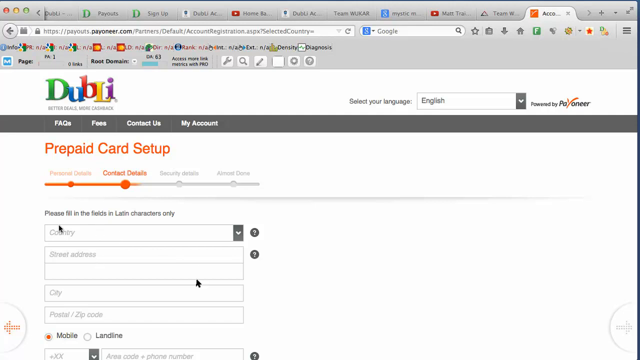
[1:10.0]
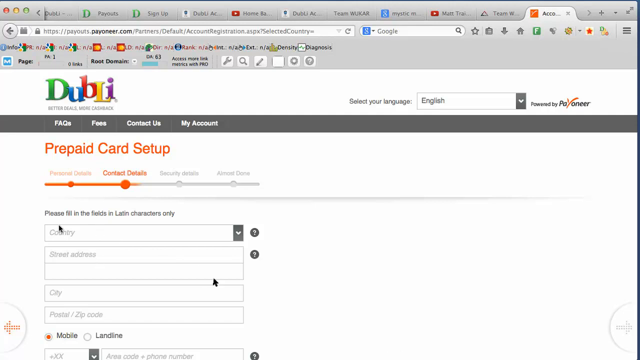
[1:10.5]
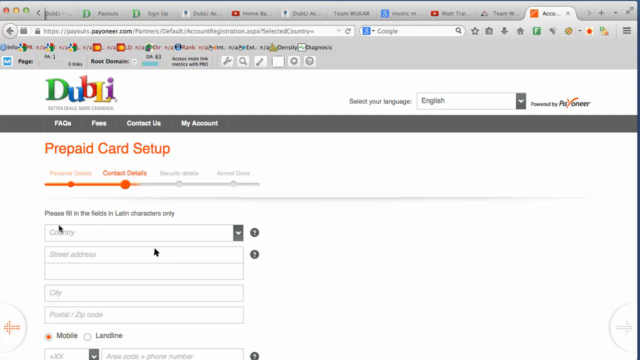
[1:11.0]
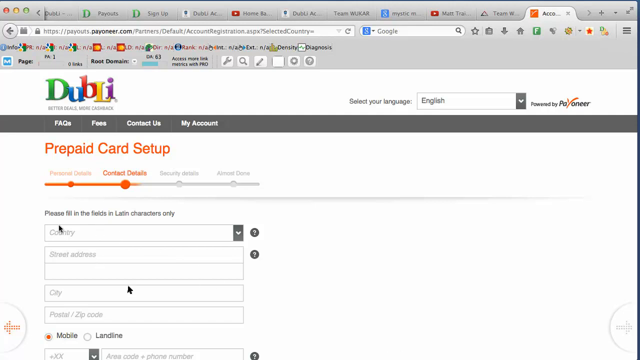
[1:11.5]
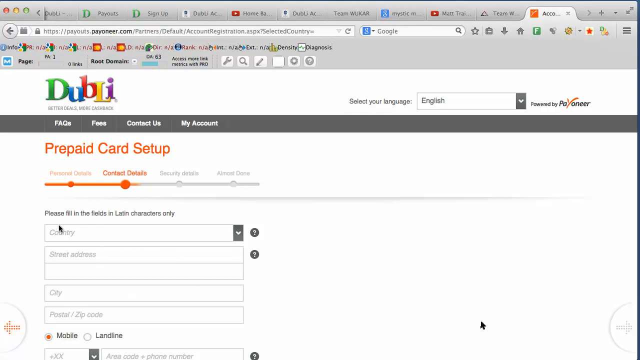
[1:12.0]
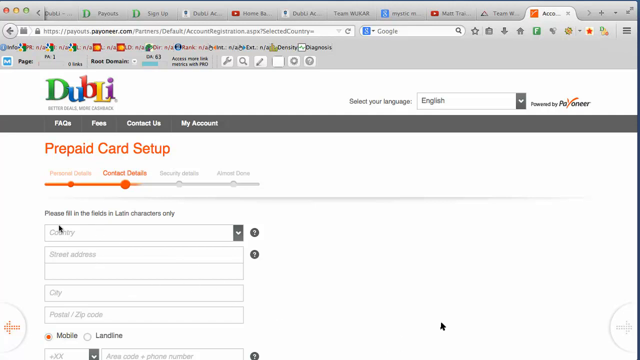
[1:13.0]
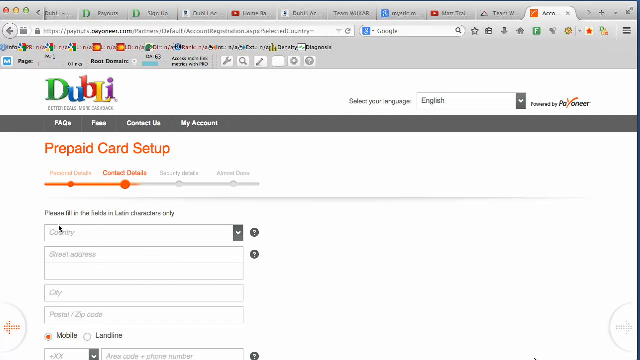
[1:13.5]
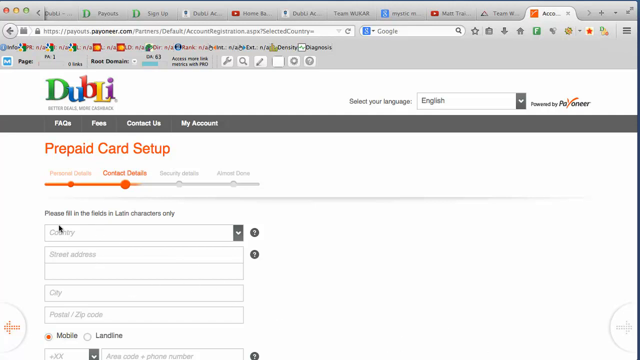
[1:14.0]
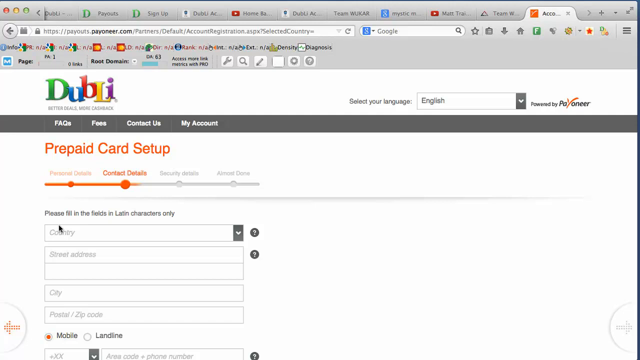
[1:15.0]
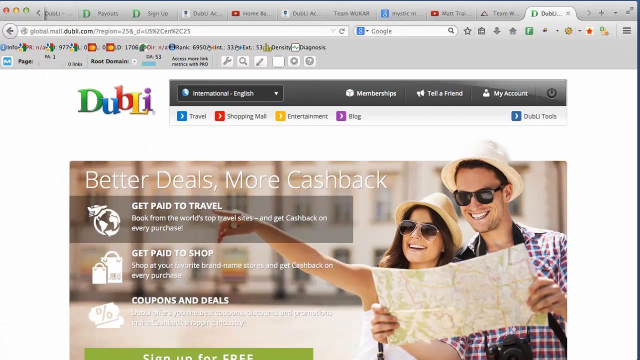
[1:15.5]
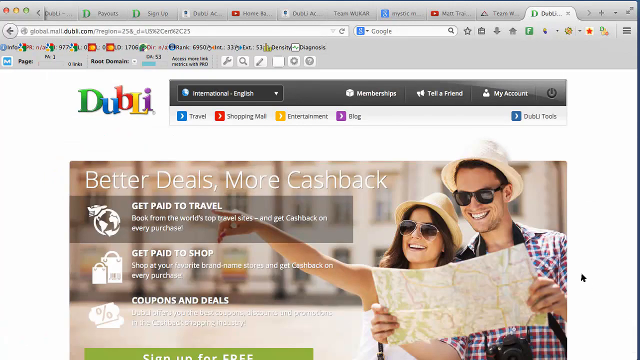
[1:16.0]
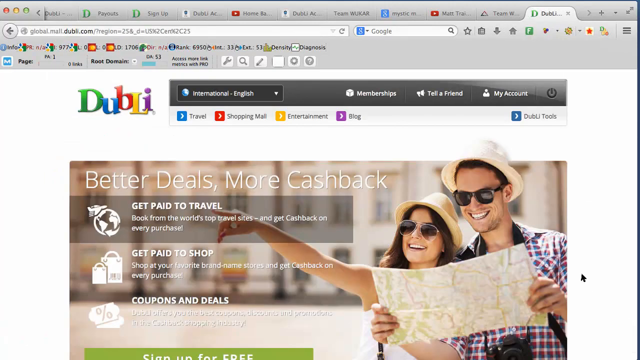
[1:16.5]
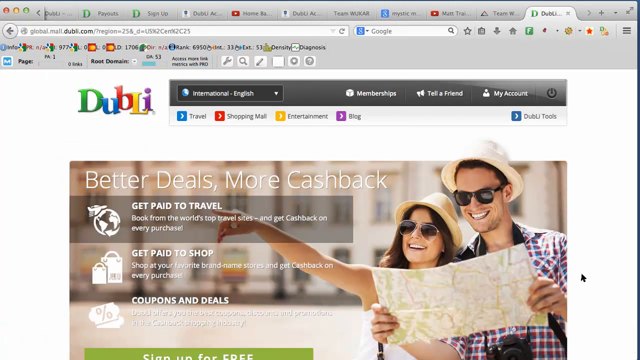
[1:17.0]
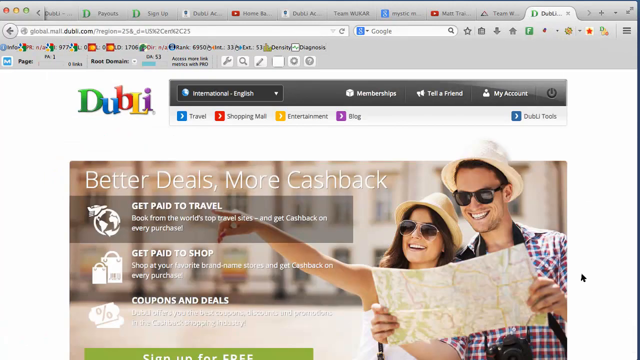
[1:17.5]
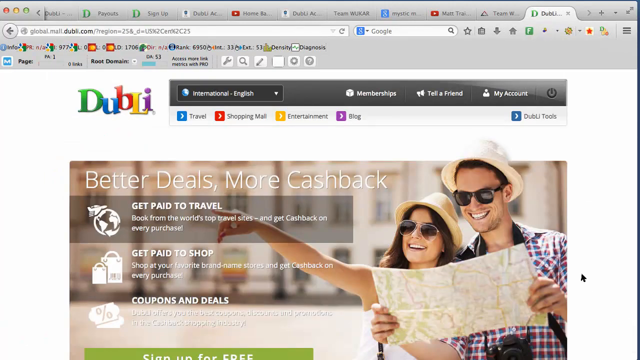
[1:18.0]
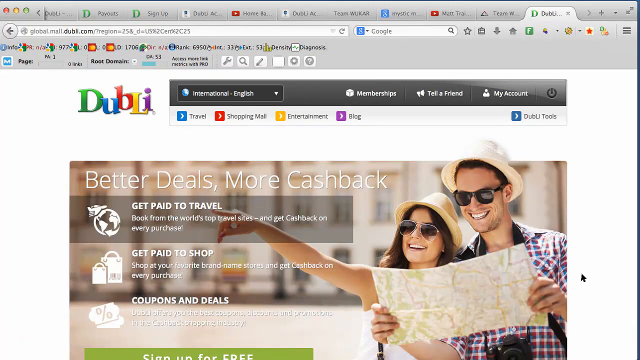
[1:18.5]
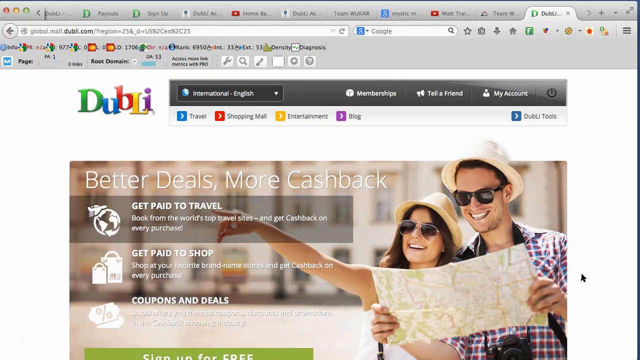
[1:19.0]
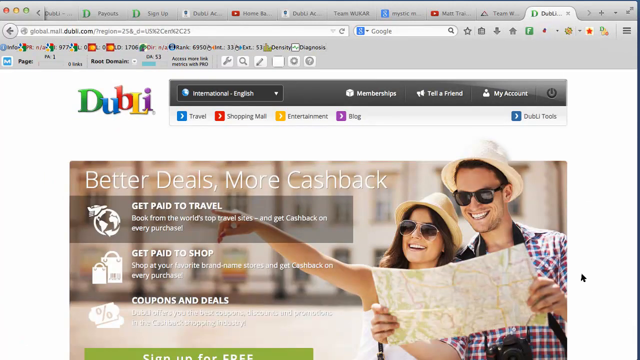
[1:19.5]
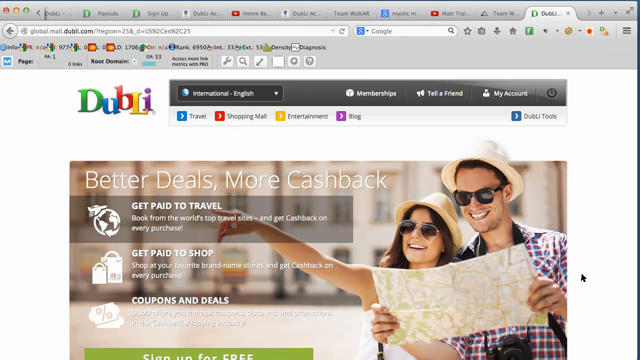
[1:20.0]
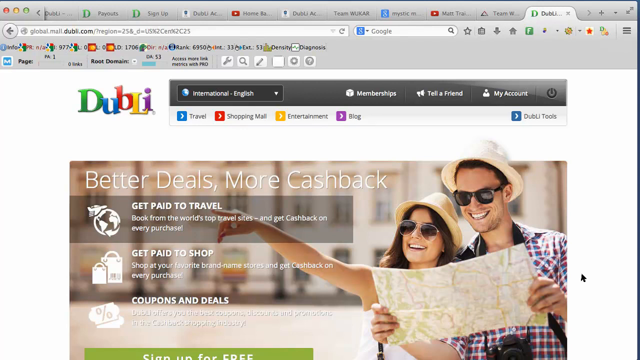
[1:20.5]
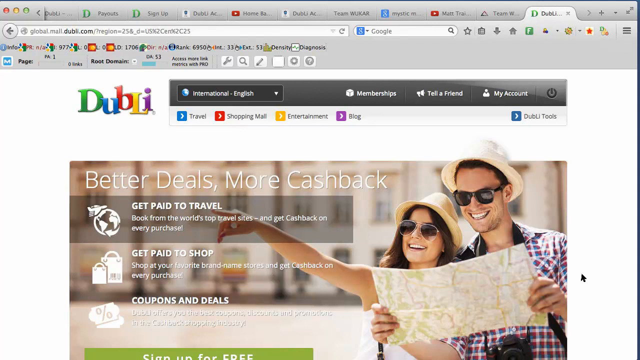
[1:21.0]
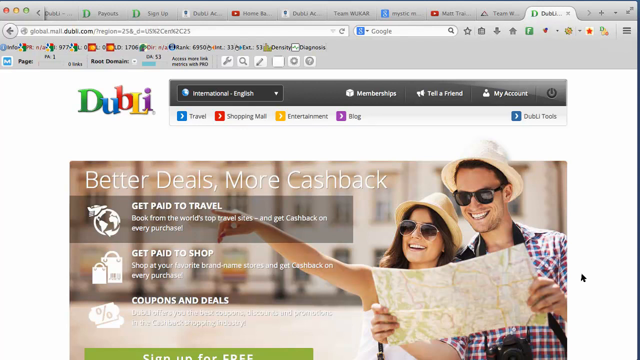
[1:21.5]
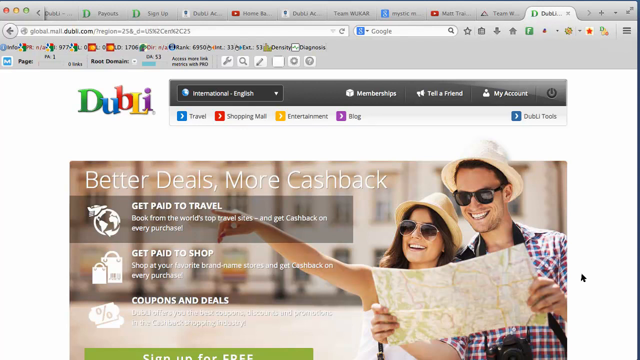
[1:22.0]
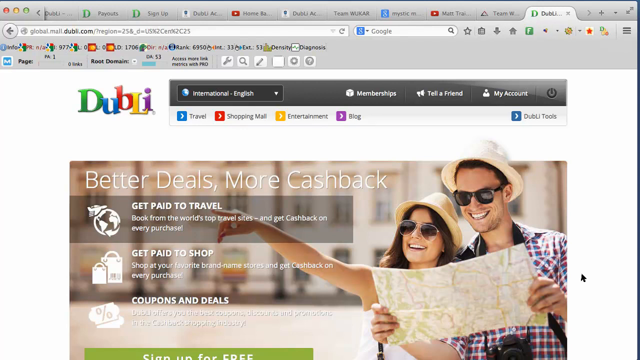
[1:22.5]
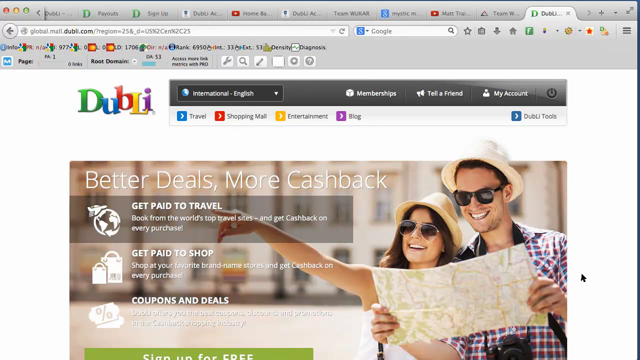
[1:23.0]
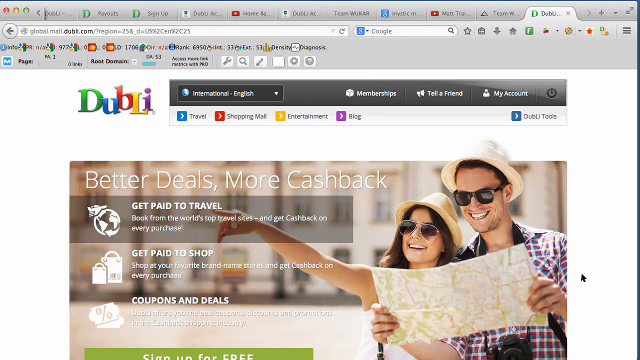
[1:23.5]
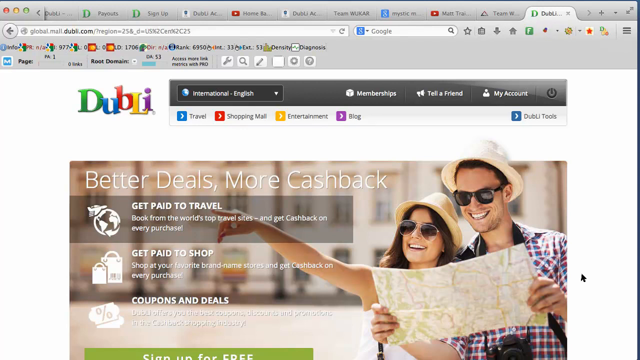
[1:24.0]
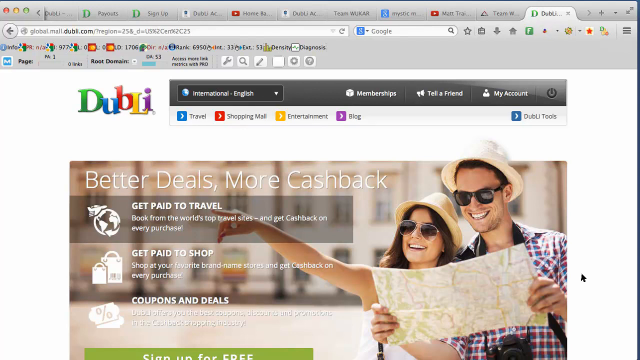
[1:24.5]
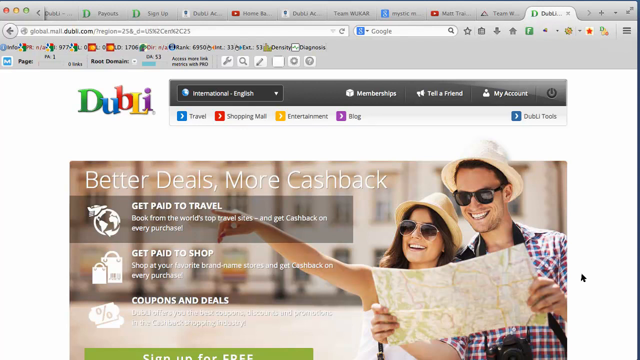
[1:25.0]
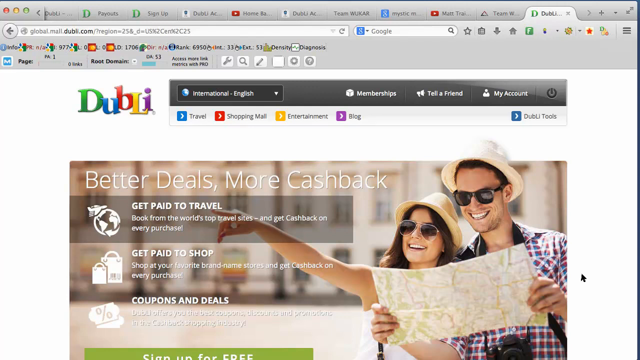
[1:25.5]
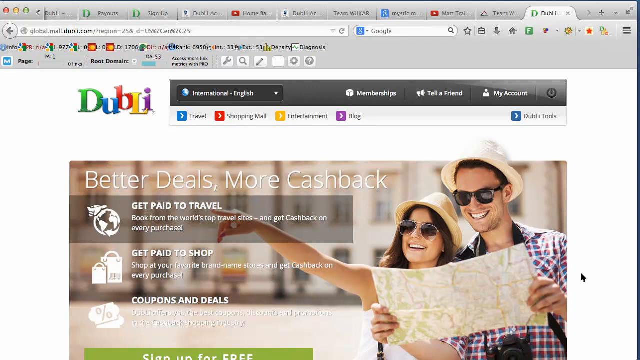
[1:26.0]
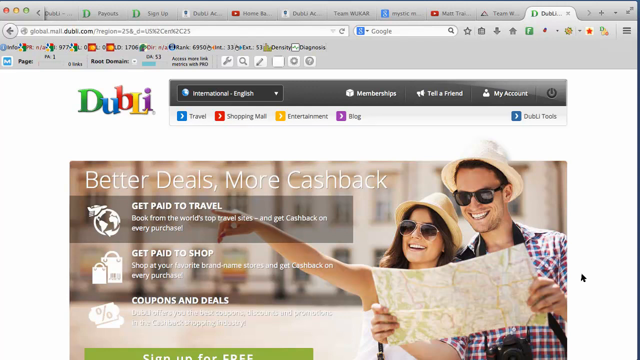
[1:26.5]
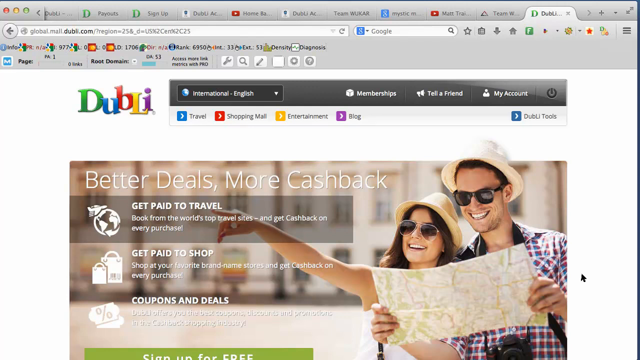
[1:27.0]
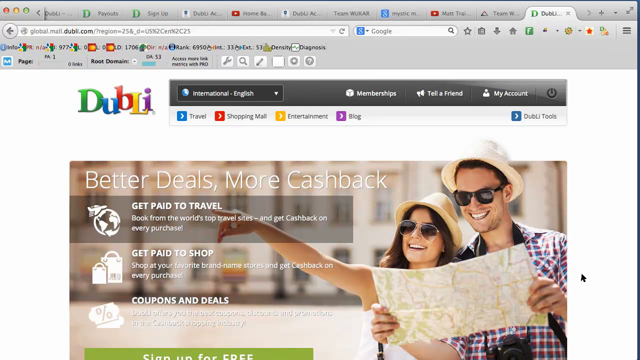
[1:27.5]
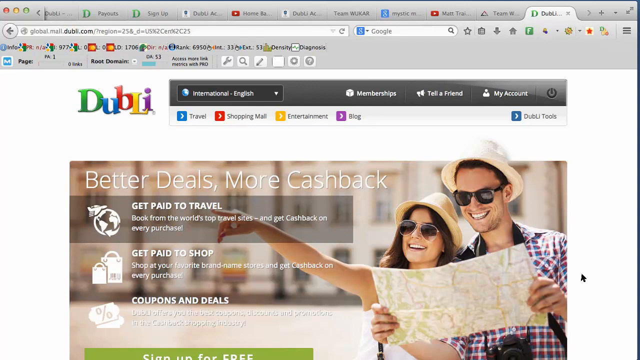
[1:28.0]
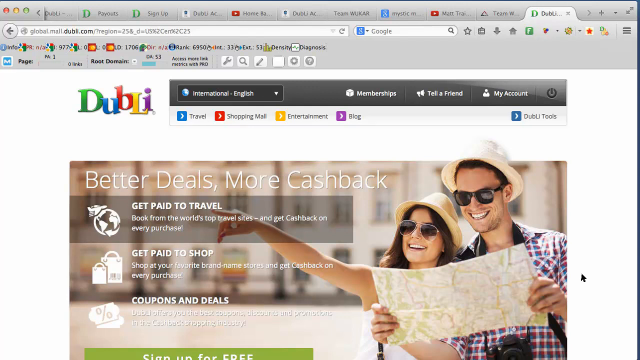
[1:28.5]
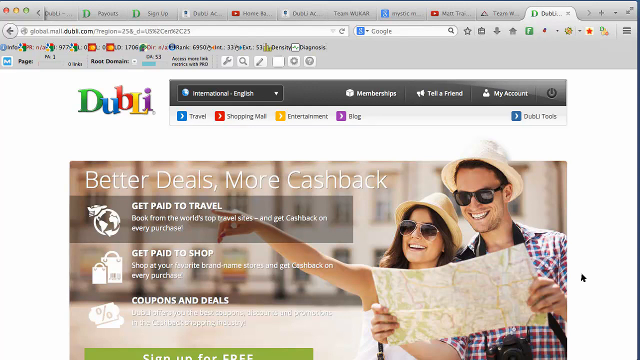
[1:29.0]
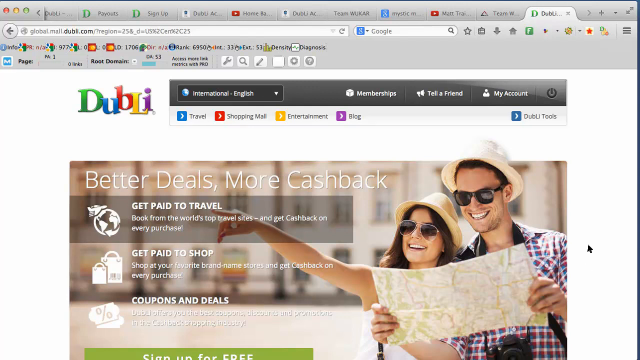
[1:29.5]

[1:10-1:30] In the upper left-hand corner is the company name, D-U-B-L-I, with a green D, blue U, red B, yellow L and purple I. Underneath are tabs in white font reading "FAQ," "please contact us" and, last, "my account." Before another section is clicked, two mouse cursors appear on the screen: one hovering over the first name field and another moving around. The person clicks on another section, which shows an image of a smiling couple on the left side of the screen, holding a map, wearing matching beige hats and sunglasses. The woman points up with the pointer finger of her right hand. Text reads "better deals, more cash back."